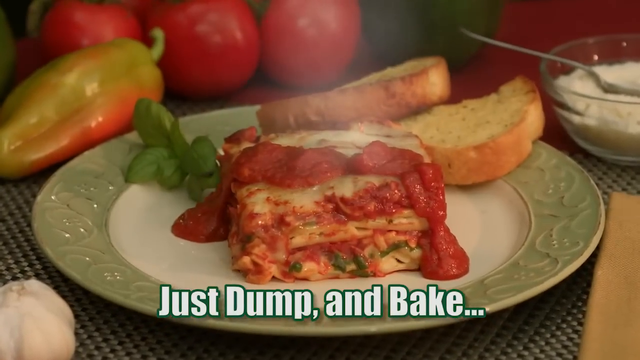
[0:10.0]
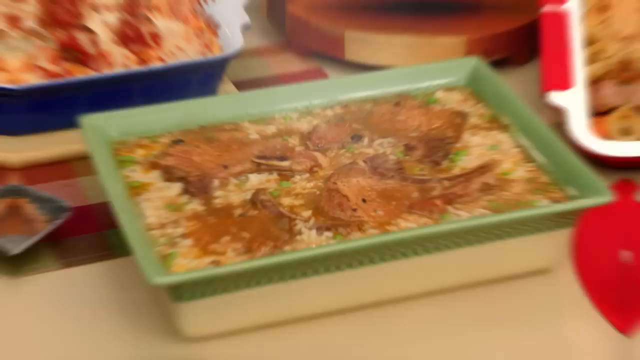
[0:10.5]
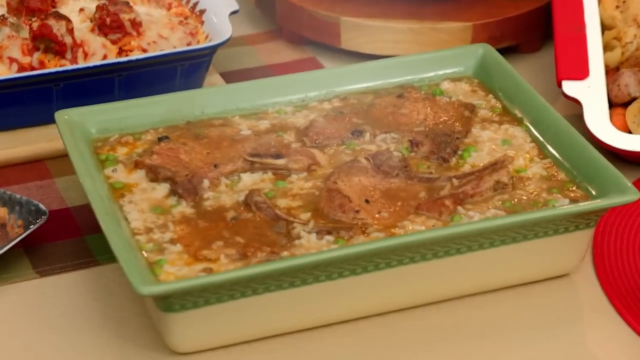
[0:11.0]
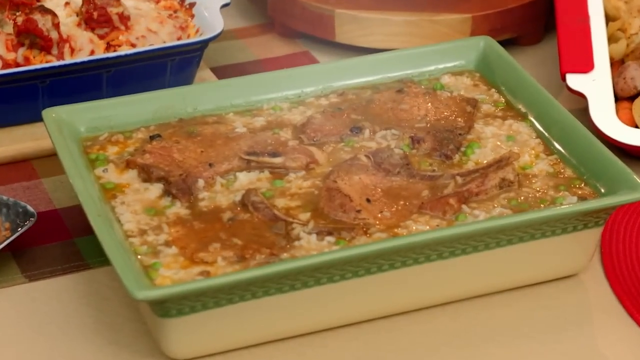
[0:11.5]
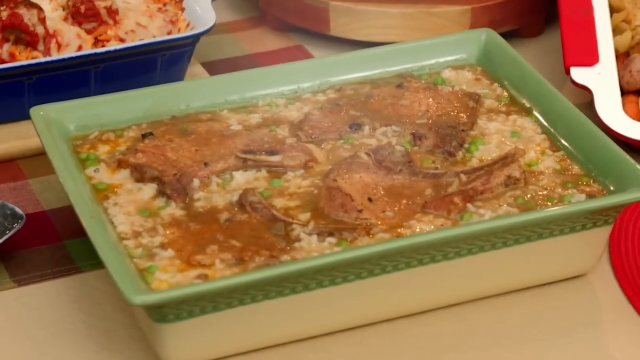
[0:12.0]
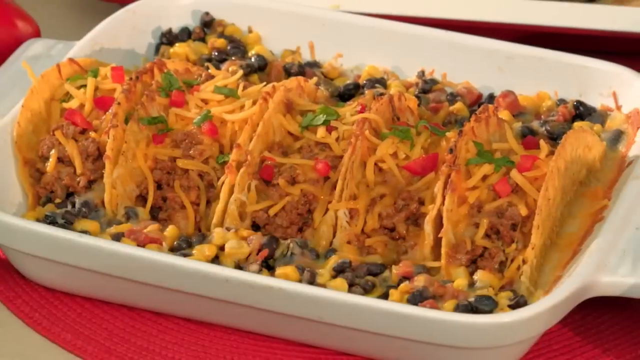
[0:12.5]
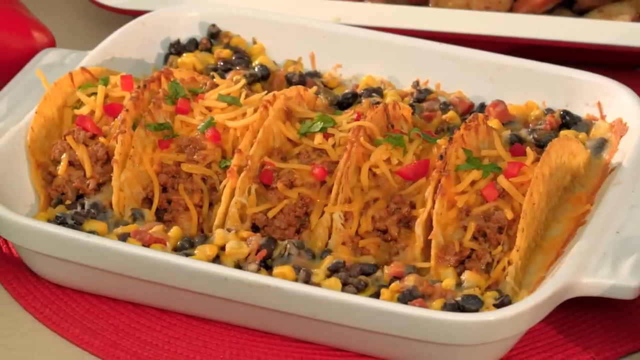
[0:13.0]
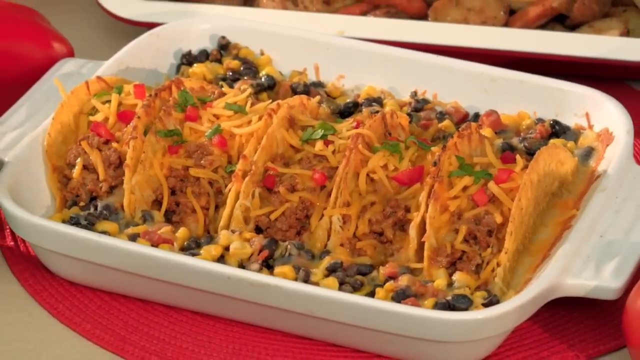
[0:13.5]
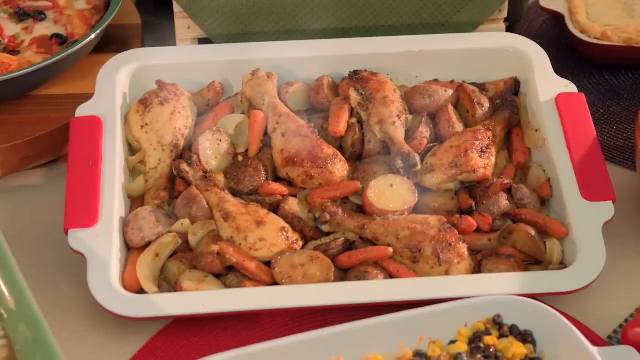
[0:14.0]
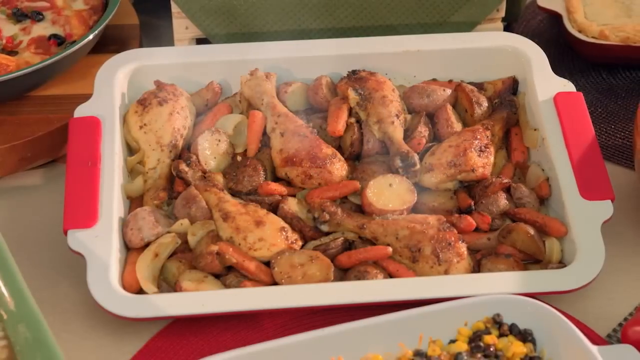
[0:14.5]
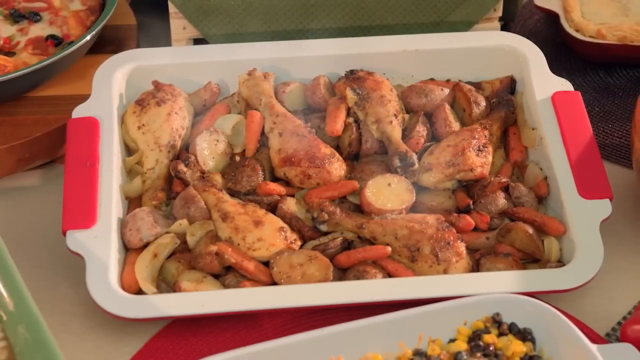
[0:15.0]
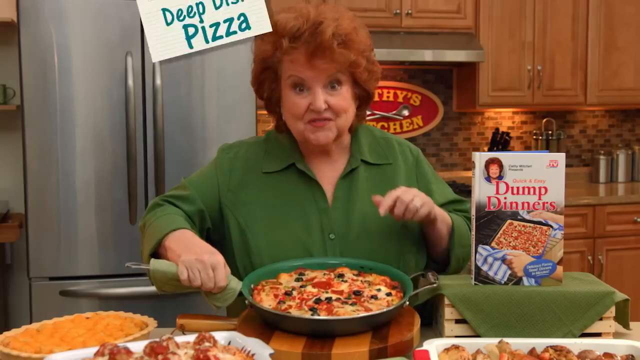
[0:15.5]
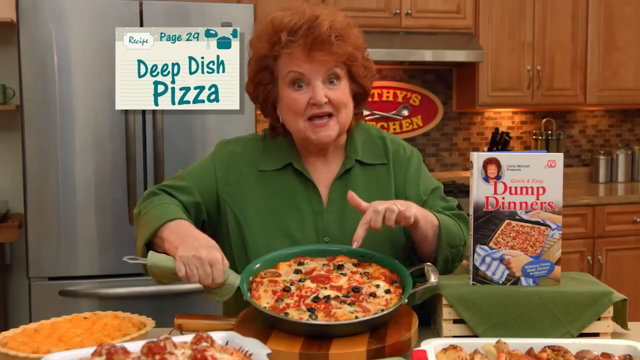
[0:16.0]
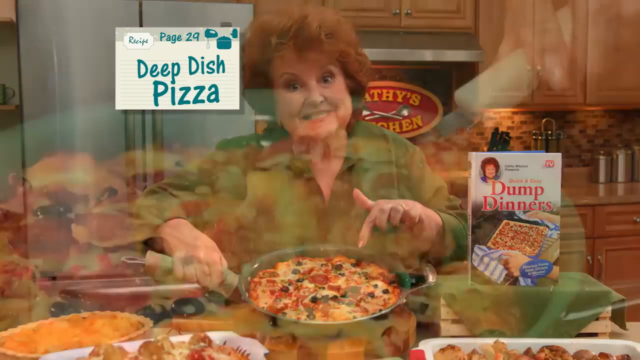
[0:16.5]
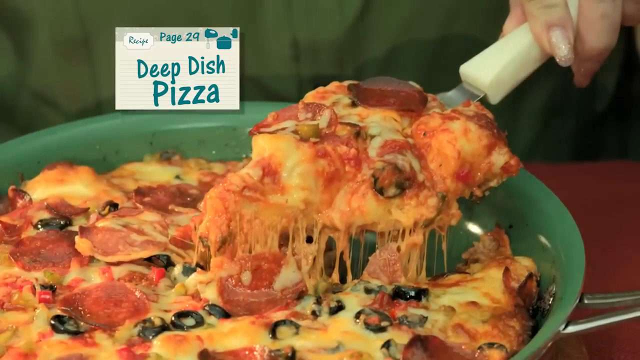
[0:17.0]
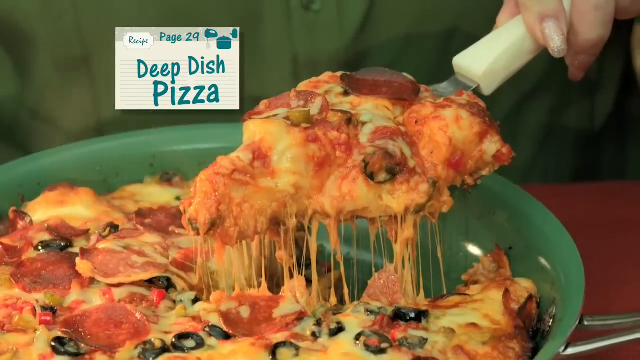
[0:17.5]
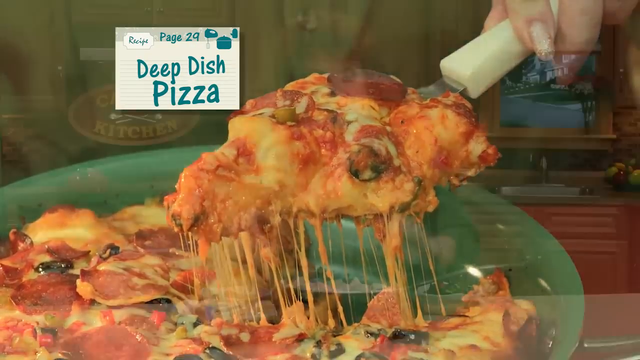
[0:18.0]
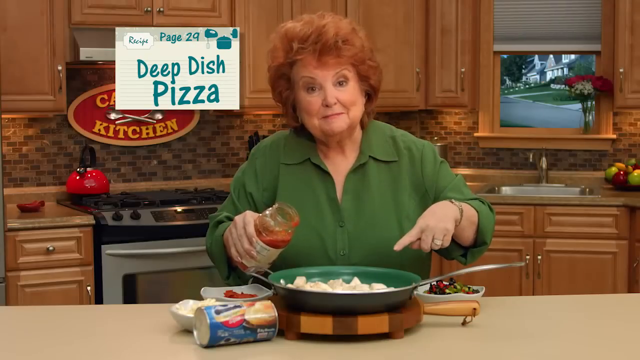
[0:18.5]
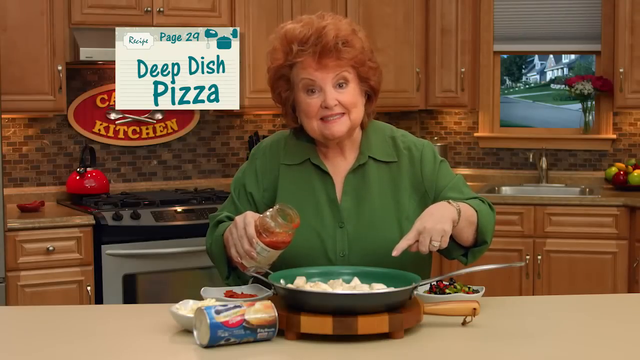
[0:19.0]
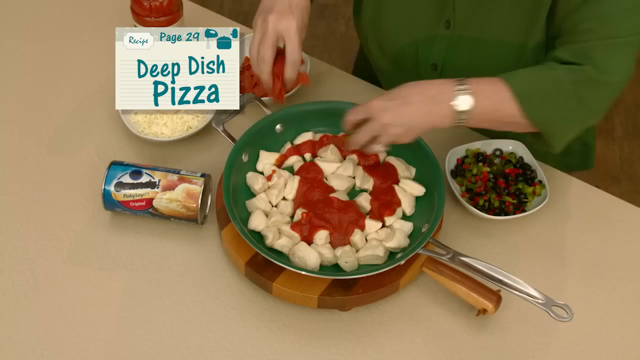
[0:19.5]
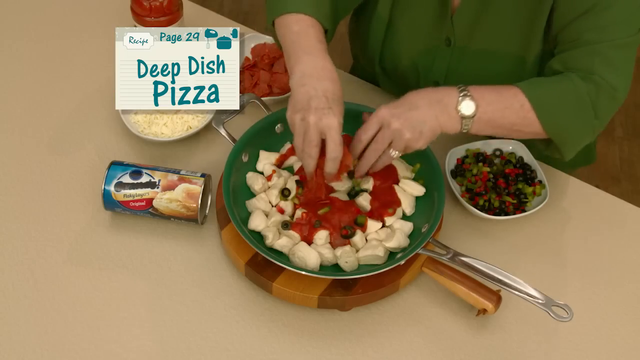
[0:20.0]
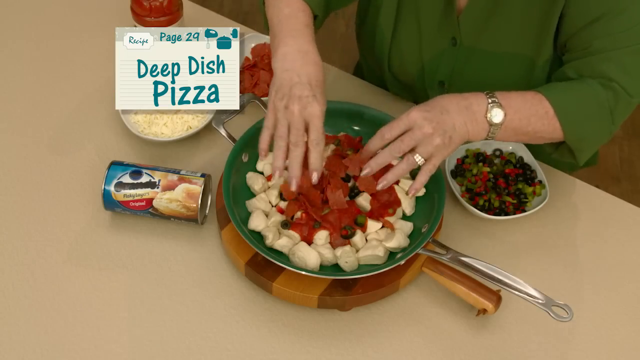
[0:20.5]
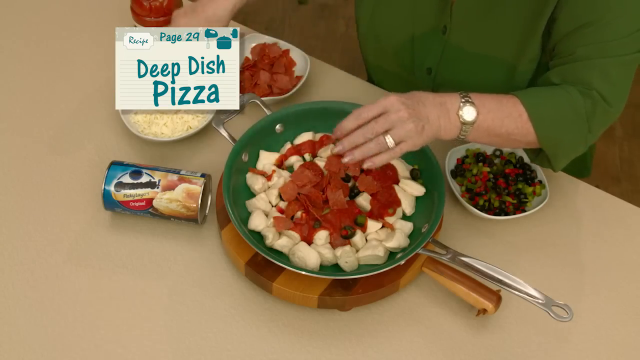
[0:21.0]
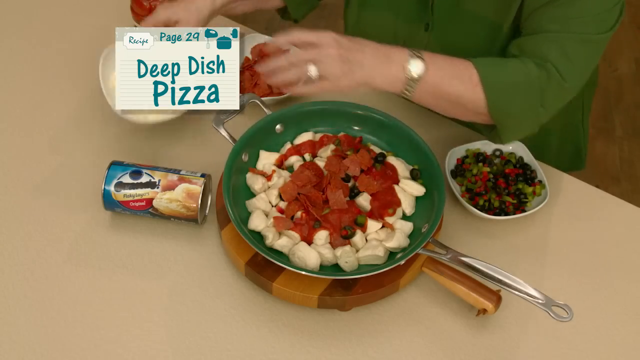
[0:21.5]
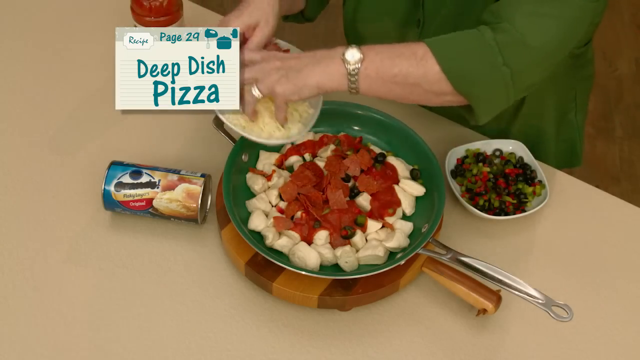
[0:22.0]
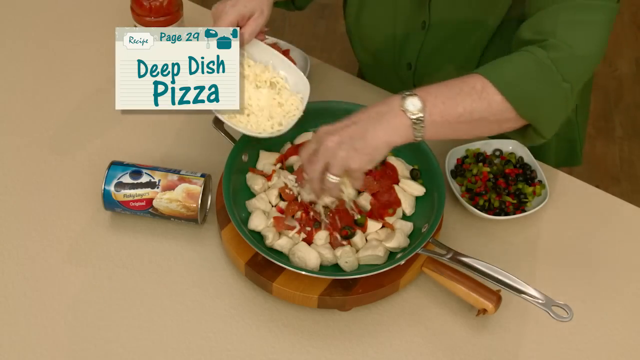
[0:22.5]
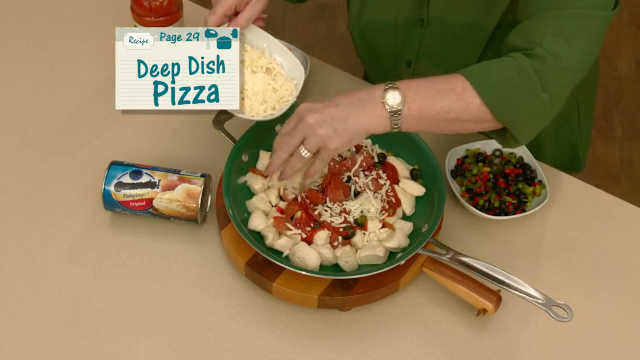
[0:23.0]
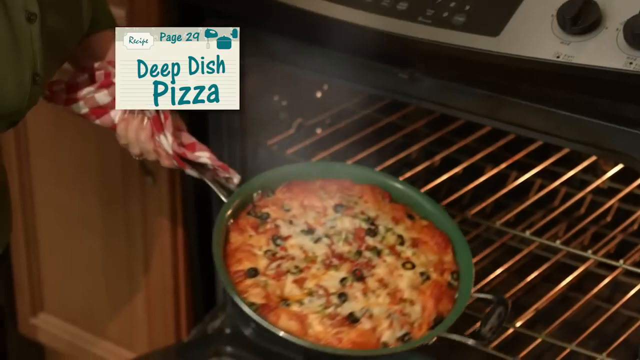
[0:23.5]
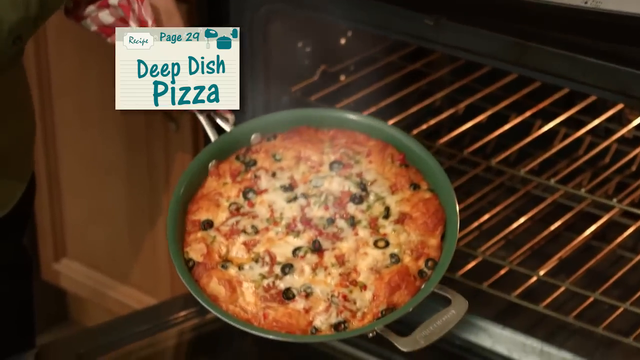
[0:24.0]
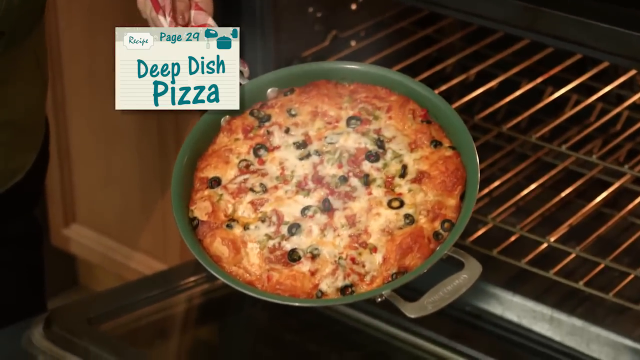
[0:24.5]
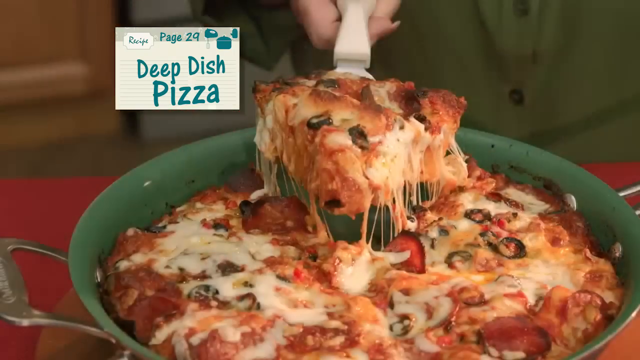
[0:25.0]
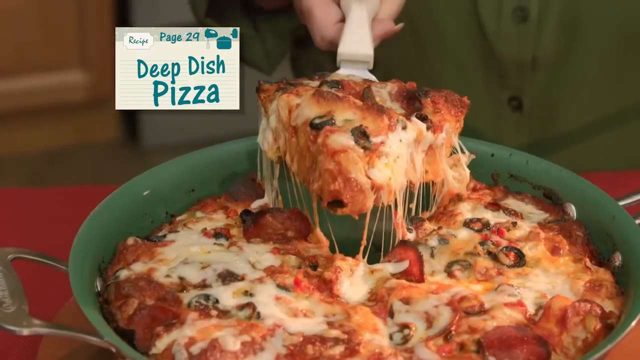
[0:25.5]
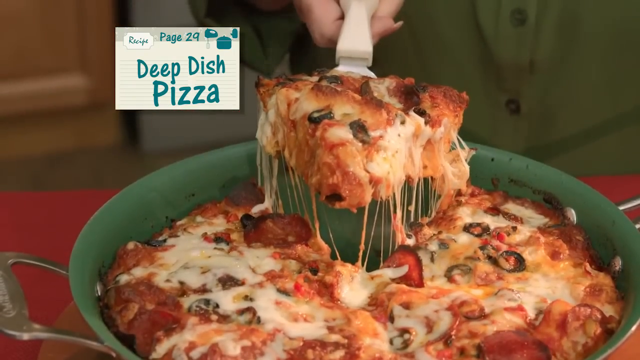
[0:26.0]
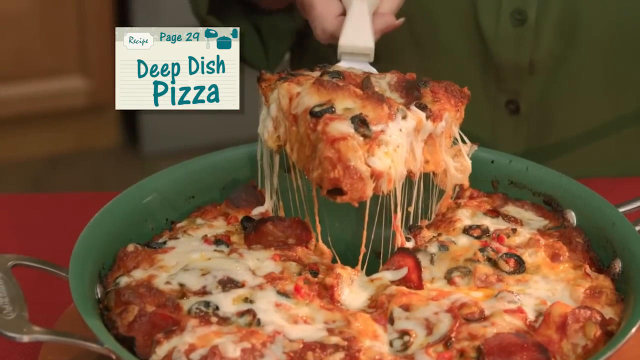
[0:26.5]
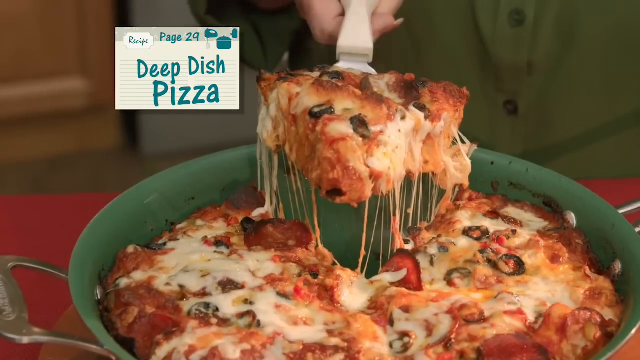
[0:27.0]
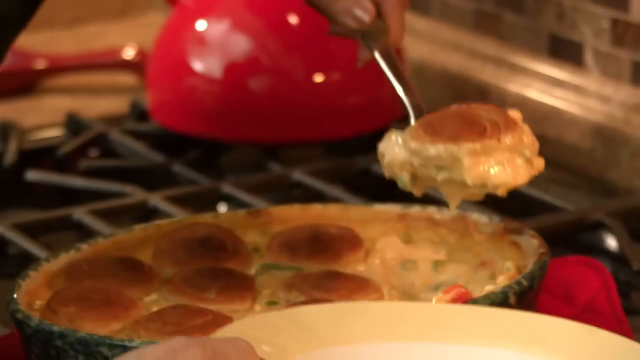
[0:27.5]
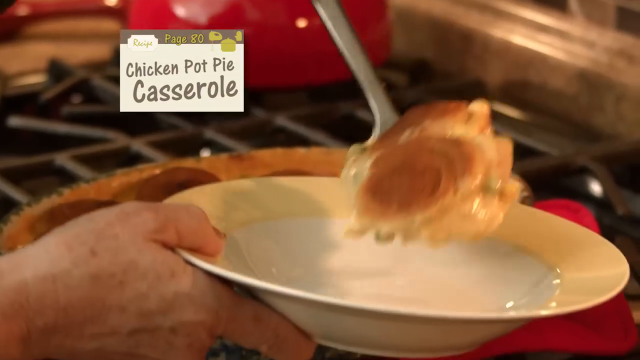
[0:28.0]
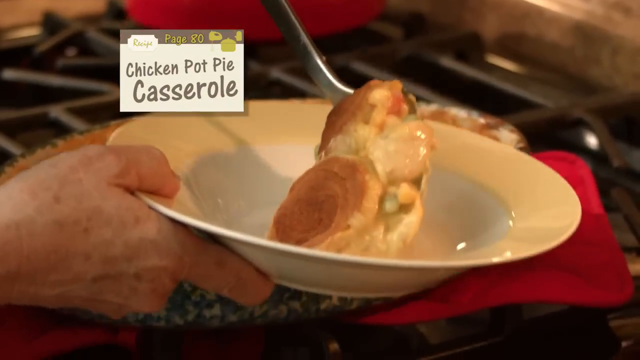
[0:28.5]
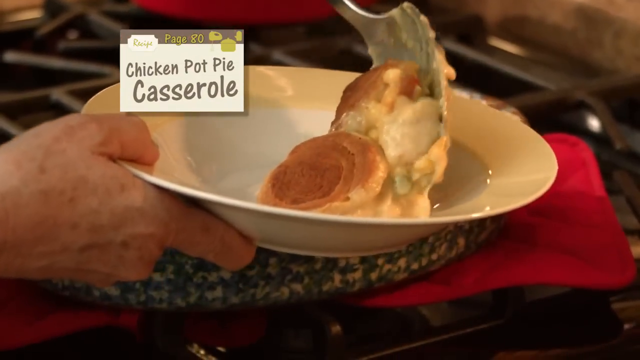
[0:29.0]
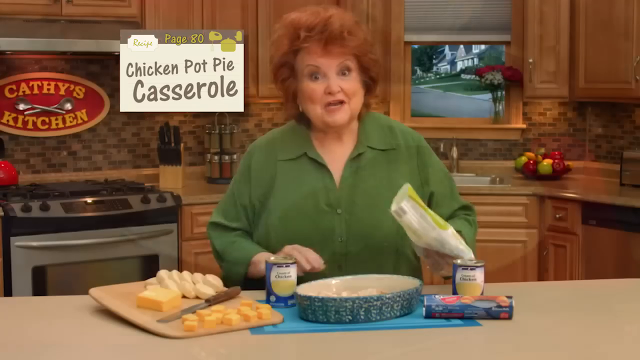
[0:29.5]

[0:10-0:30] Several food dishes appear right away. First comes what looks like lasagna, with two loaves of bread in the back, and some type of sauce apparently being poured on top. The video transitions to what looks like some type of beef stew, possibly with pork chops in it. Next, five tacos are inside a metal plate. Then a bunch of chicken with potatoes, carrots and stew is being cooked, apparently just taken out of the oven. The video goes back to the woman from earlier, who is cooking what looks like a pizza in a very small pan: the deep dish pizza on page 29. She appears to be getting all the ingredients ready and putting the pieces together, and the end product is shown.